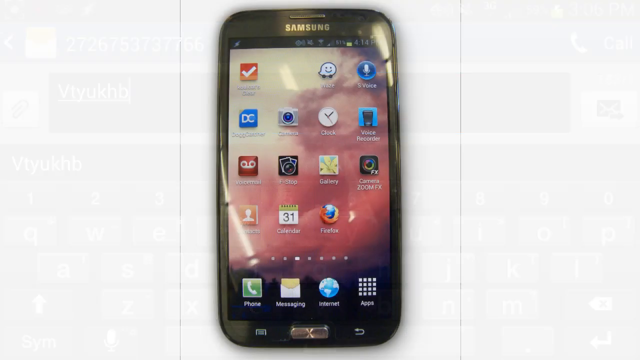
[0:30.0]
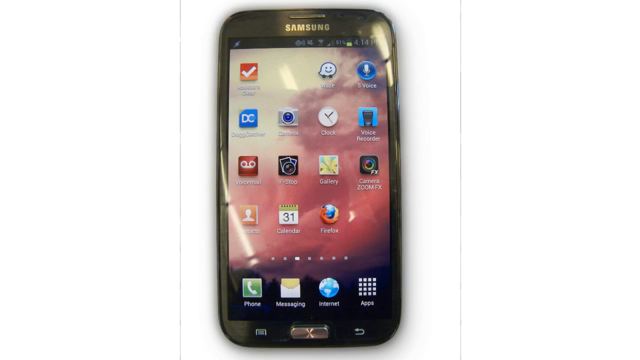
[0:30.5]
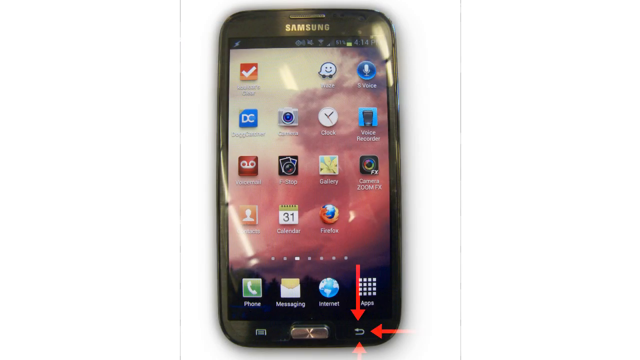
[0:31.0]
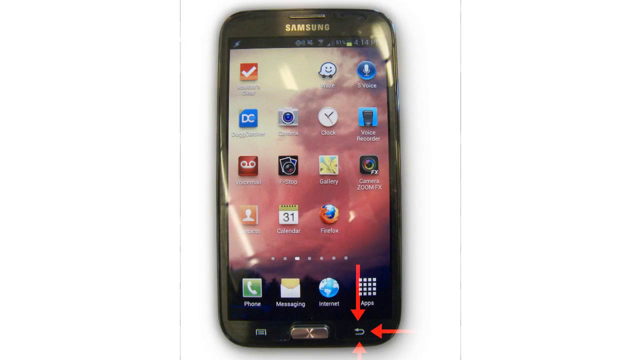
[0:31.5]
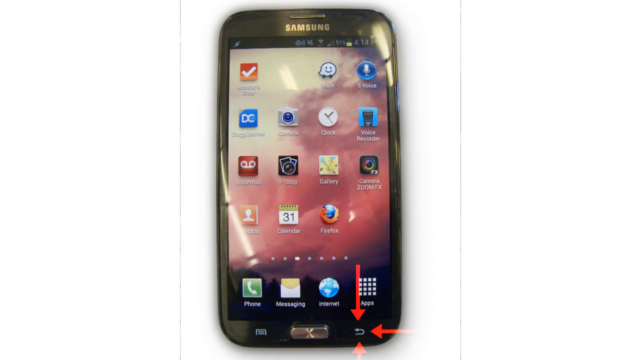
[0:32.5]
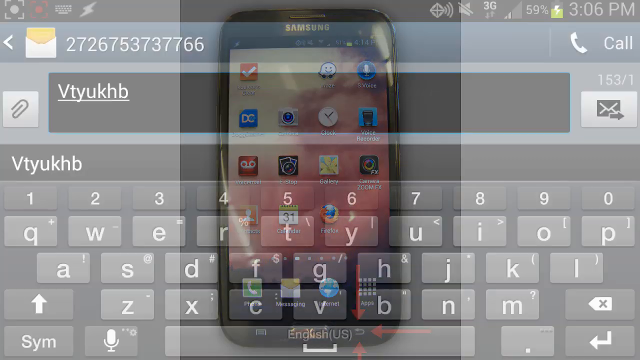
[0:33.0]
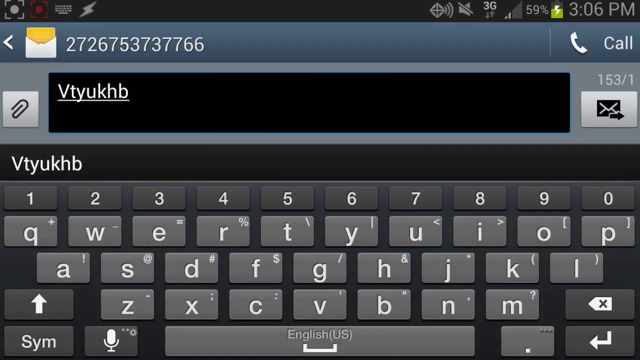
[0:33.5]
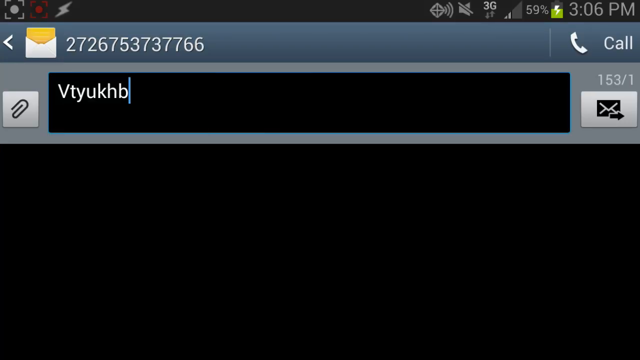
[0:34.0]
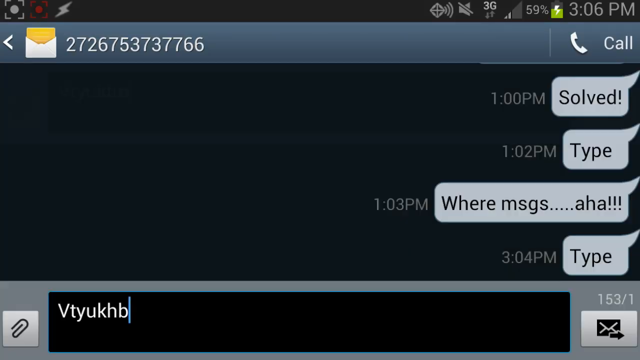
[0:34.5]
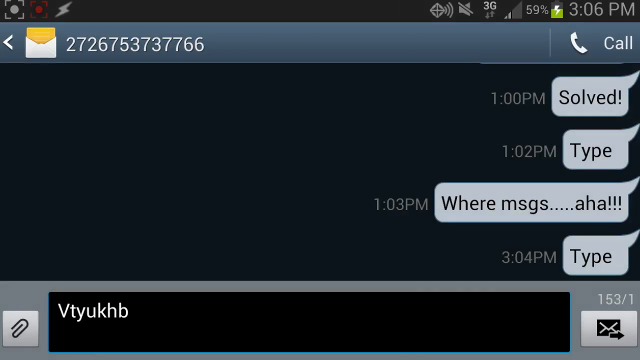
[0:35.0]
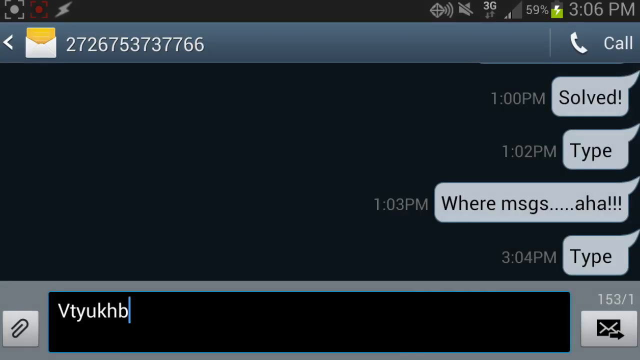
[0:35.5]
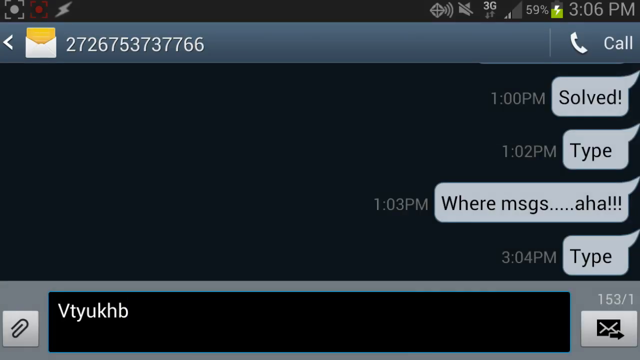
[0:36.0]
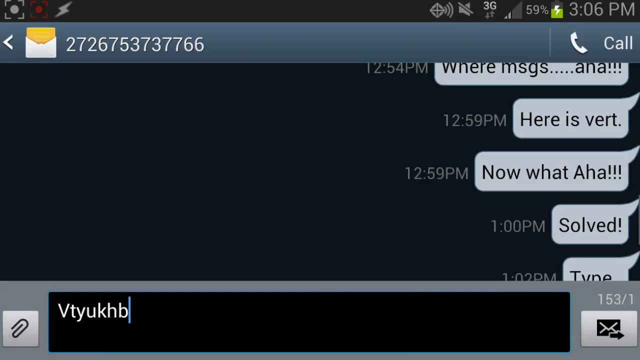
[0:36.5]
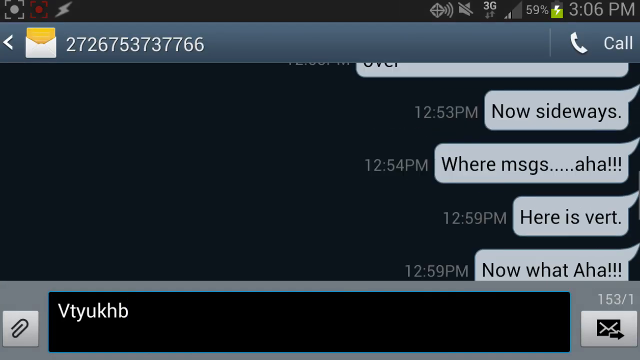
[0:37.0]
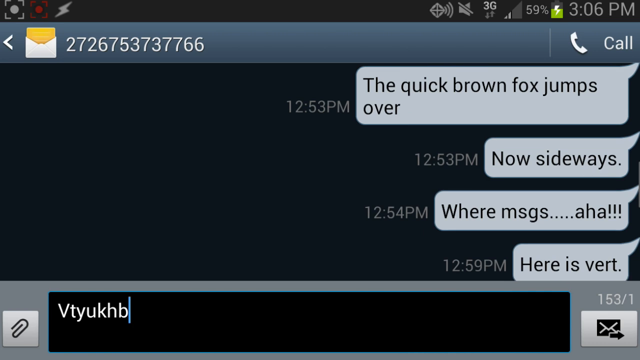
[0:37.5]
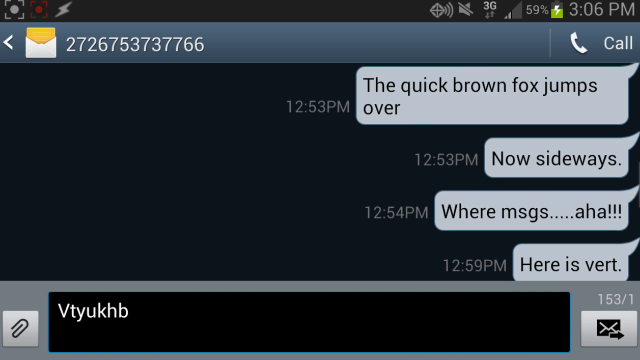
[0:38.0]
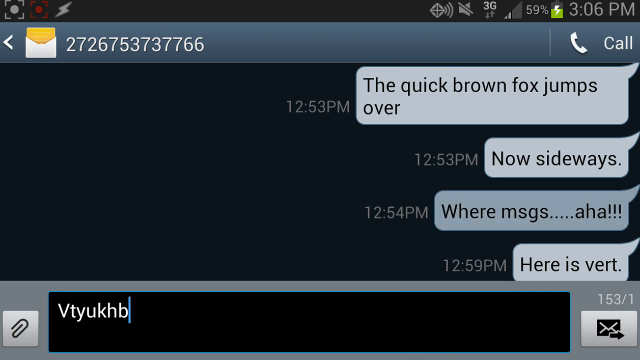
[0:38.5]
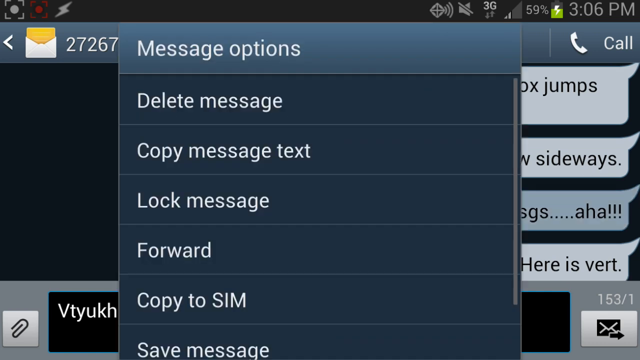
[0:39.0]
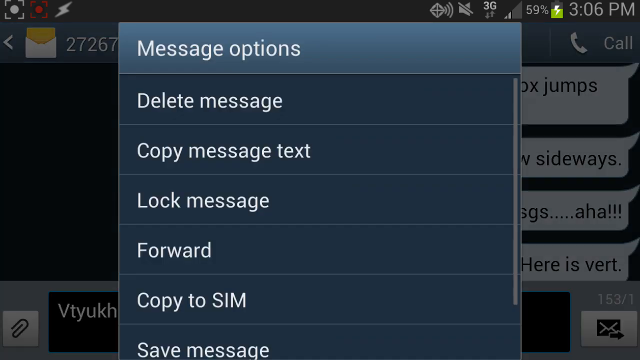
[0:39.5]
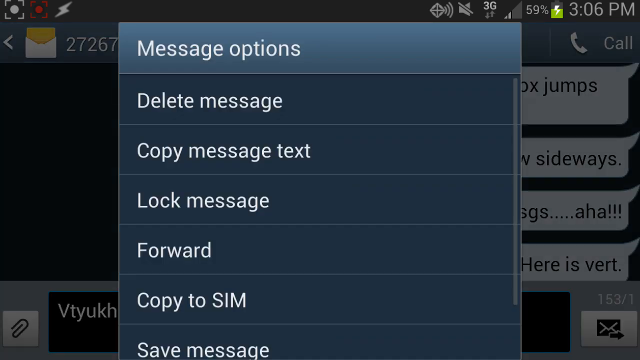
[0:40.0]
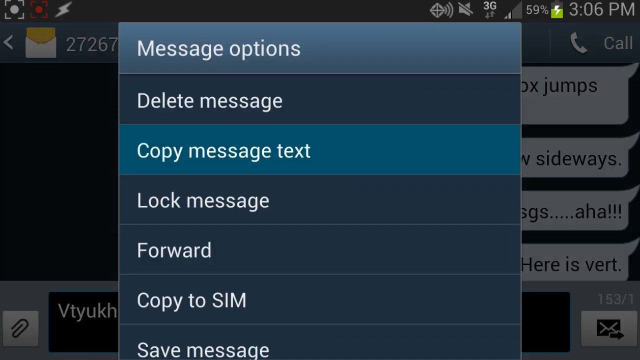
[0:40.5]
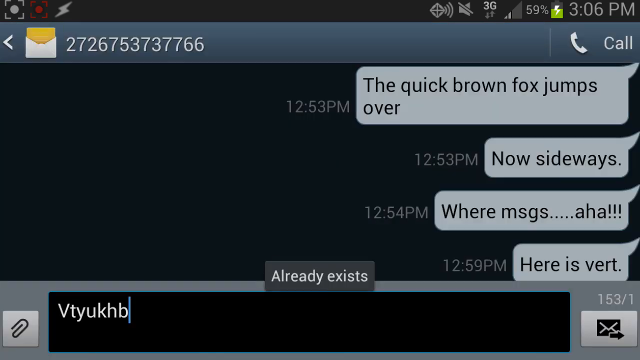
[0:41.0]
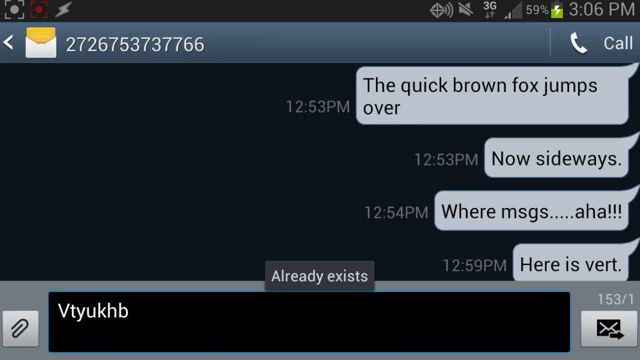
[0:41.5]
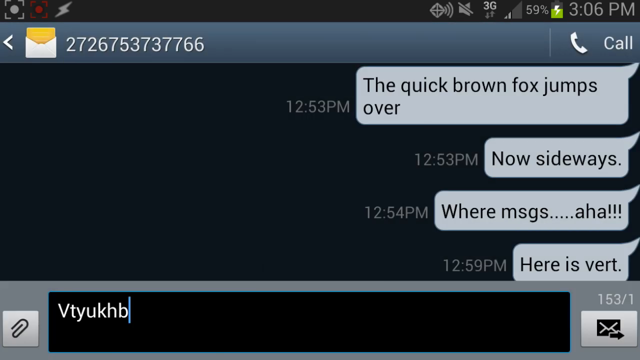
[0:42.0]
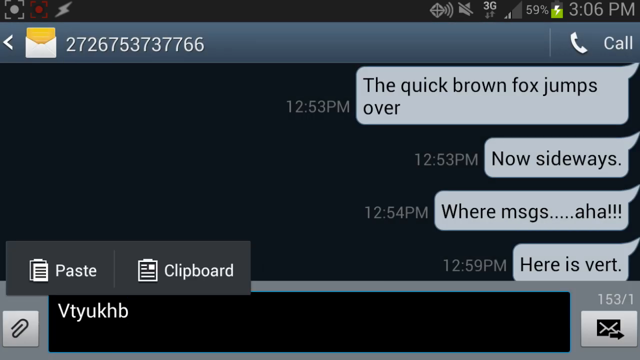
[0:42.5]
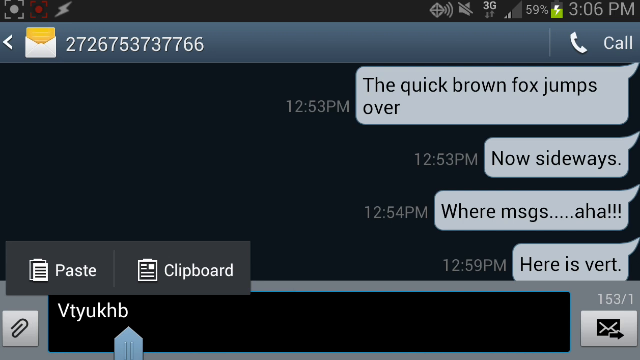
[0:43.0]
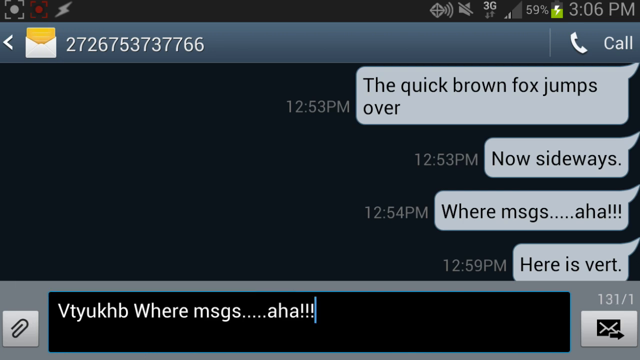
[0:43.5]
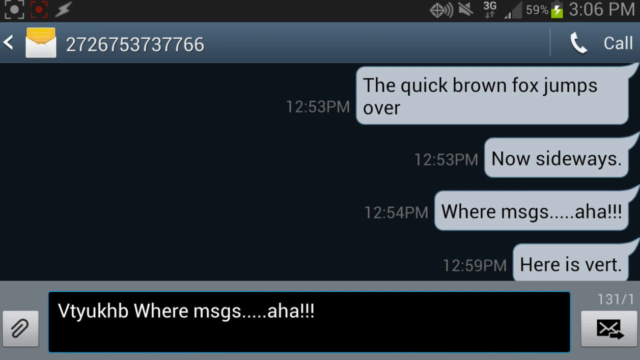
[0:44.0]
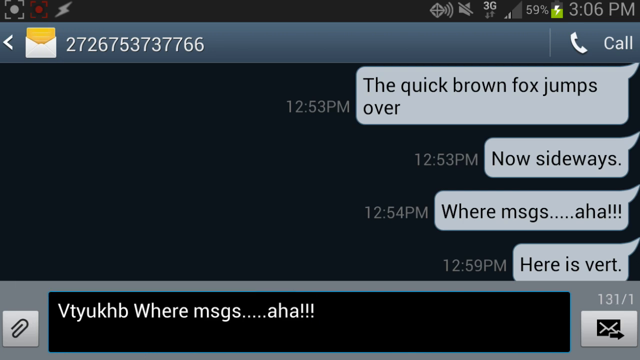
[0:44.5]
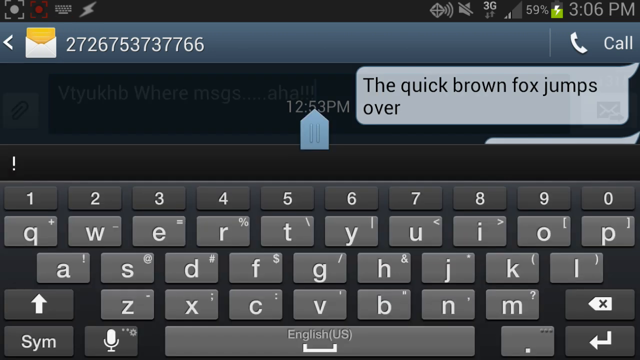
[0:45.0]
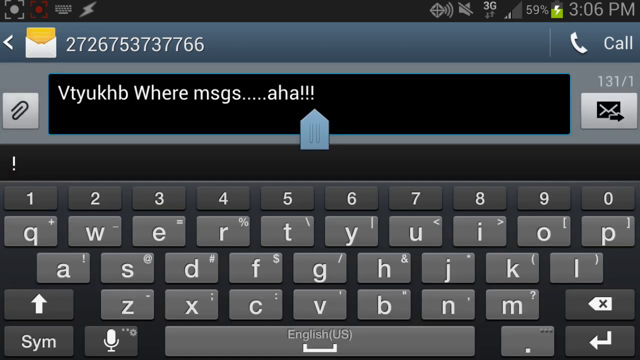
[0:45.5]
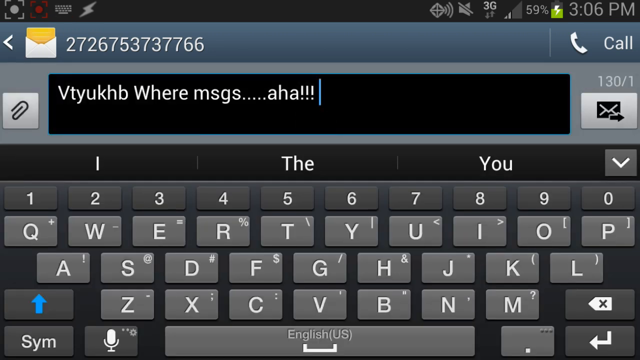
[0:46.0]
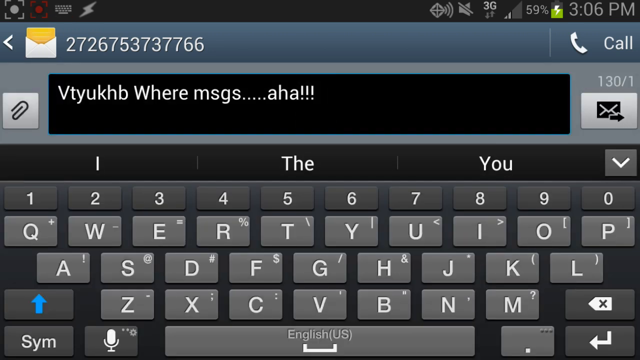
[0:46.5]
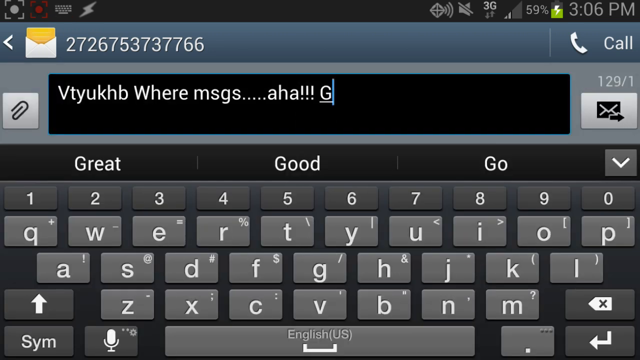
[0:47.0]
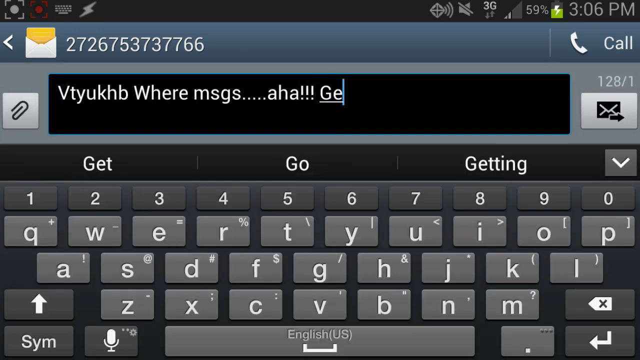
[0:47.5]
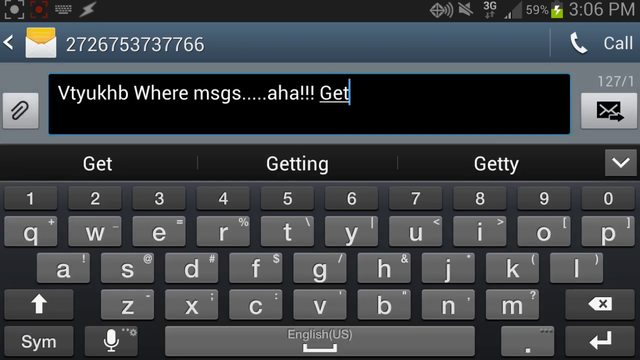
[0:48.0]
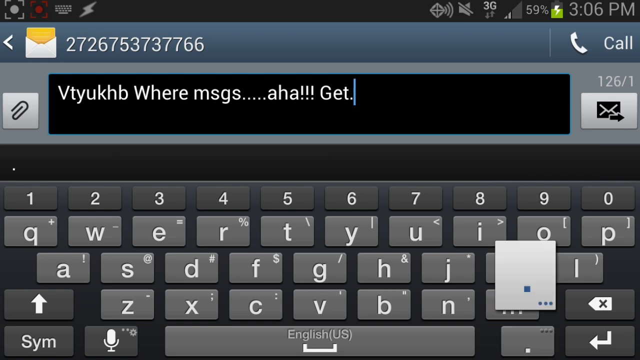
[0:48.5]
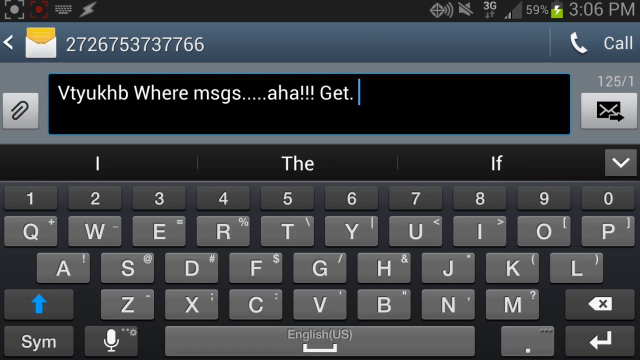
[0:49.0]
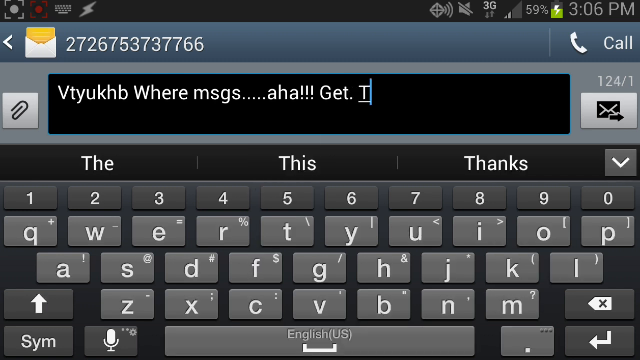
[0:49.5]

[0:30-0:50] The footage of the phone turns out to be a still image of a real phone rather than live footage. An arrow indicator points to a physical back button on the phone, used to exit the keyboard. The video then cuts back to the screen recording, where more text is typed and the keyboard appears to be gone, as if the button had been pressed and the keyboard minimized. Text is copied and pasted into the box. The keyboard is then opened again, with what looks like some struggle to get it back open, and "where's the messages" is typed, almost as if the person is confused about what they are doing.